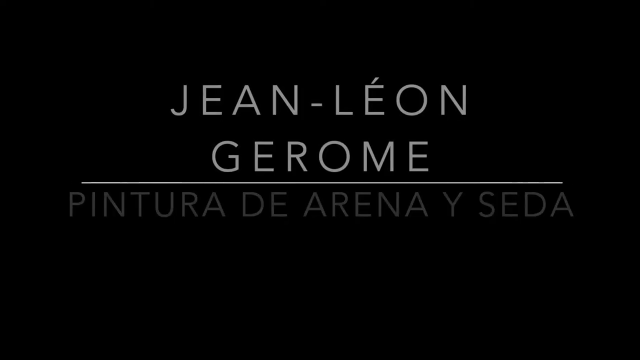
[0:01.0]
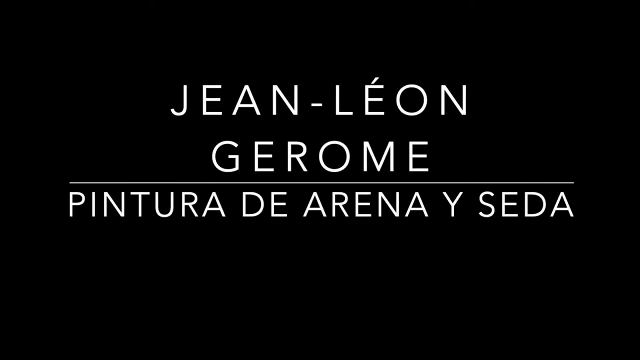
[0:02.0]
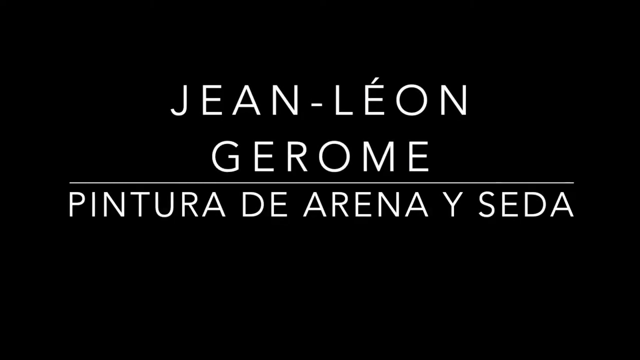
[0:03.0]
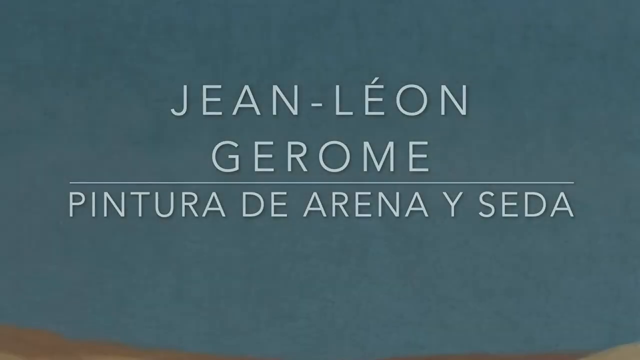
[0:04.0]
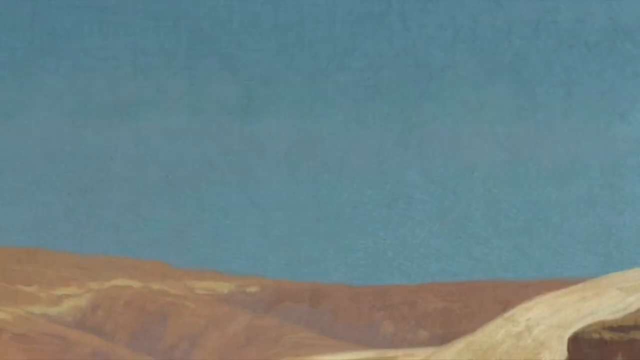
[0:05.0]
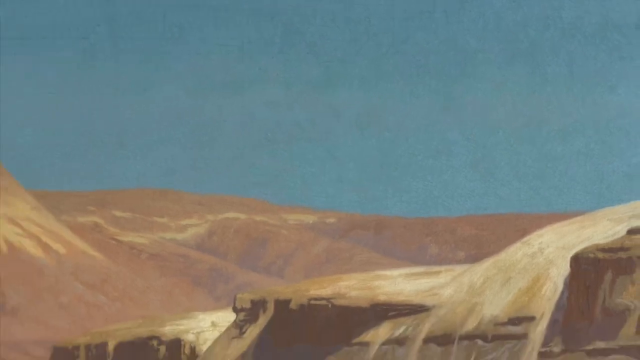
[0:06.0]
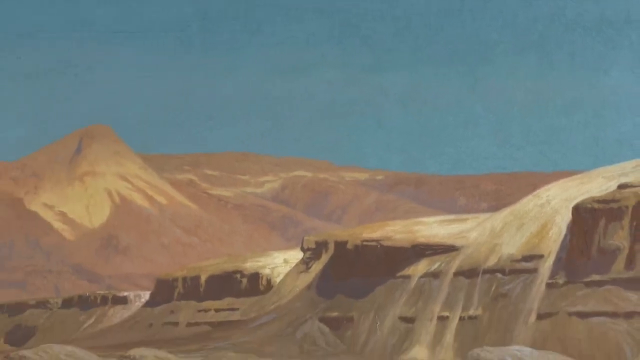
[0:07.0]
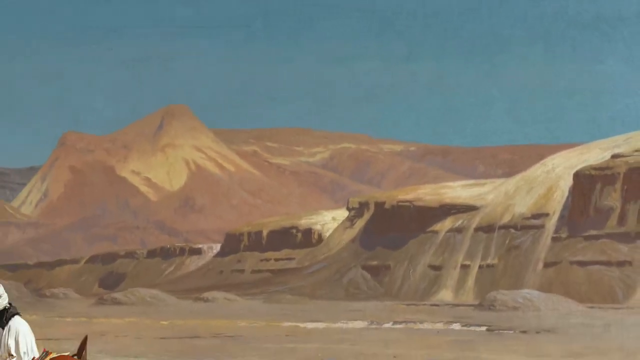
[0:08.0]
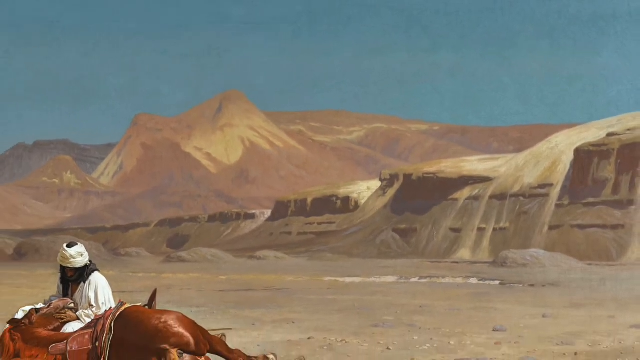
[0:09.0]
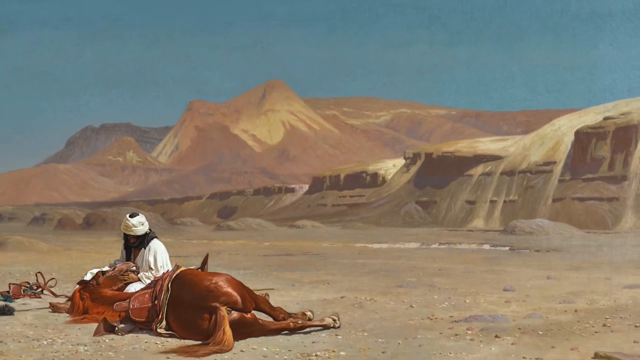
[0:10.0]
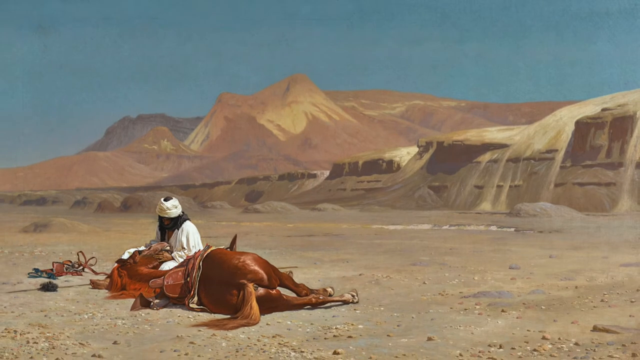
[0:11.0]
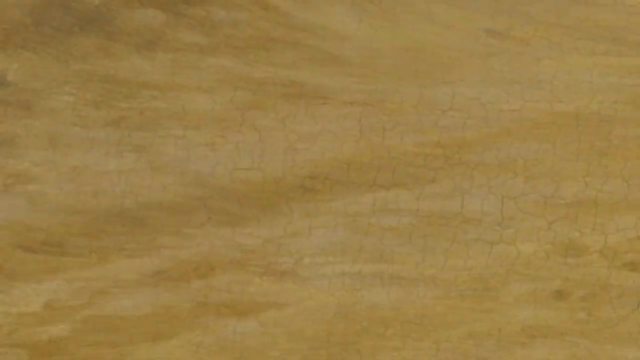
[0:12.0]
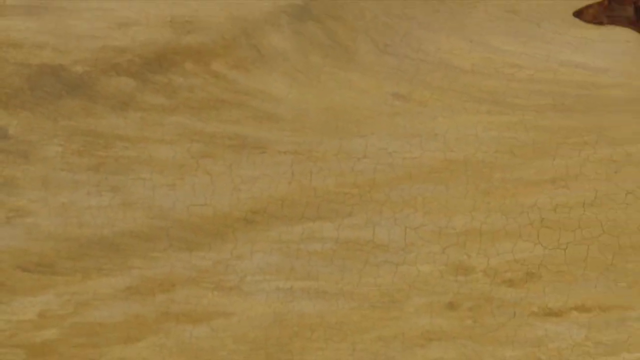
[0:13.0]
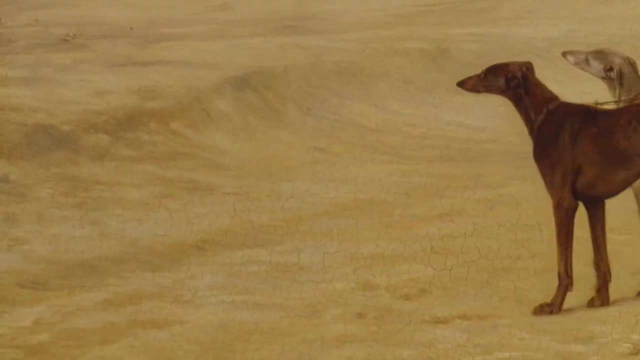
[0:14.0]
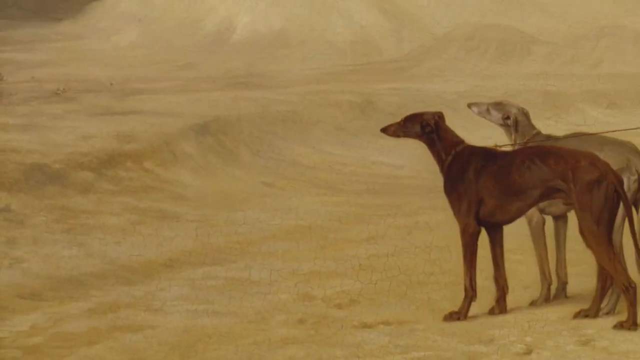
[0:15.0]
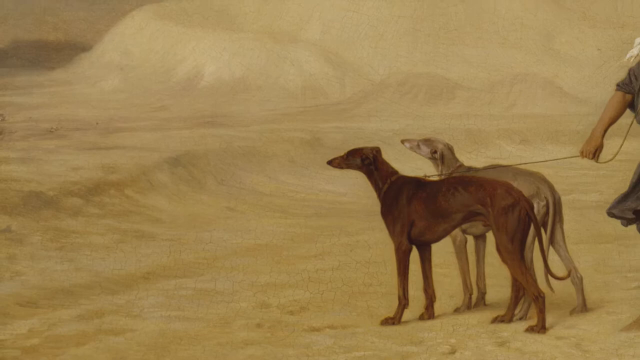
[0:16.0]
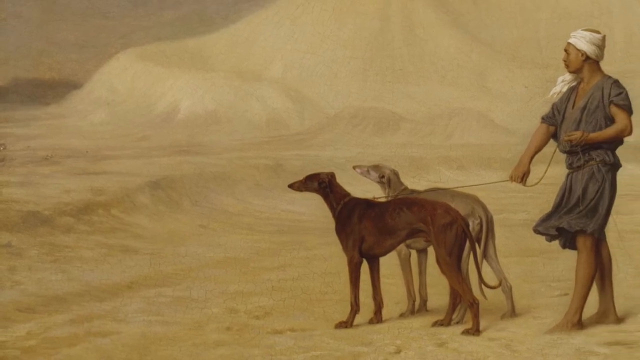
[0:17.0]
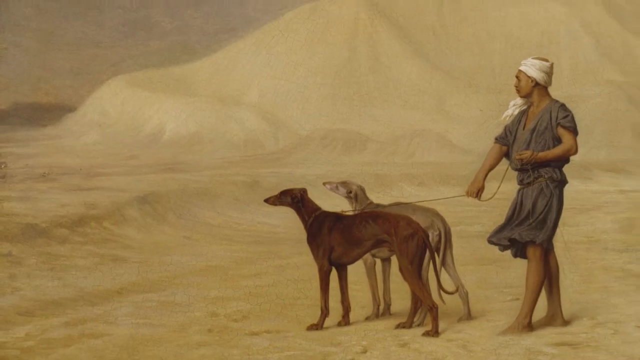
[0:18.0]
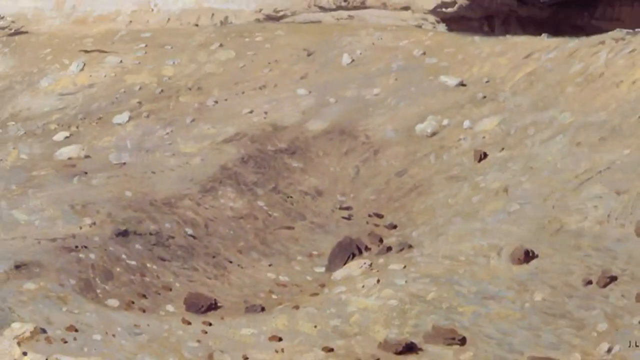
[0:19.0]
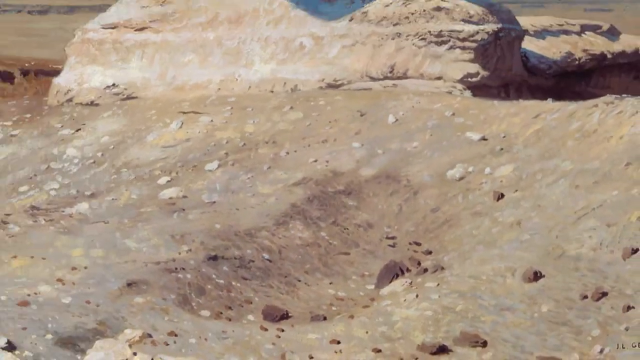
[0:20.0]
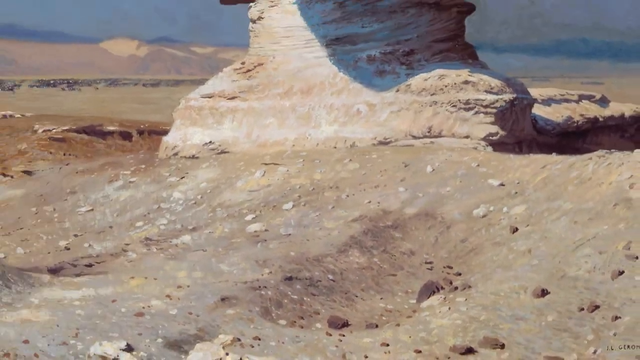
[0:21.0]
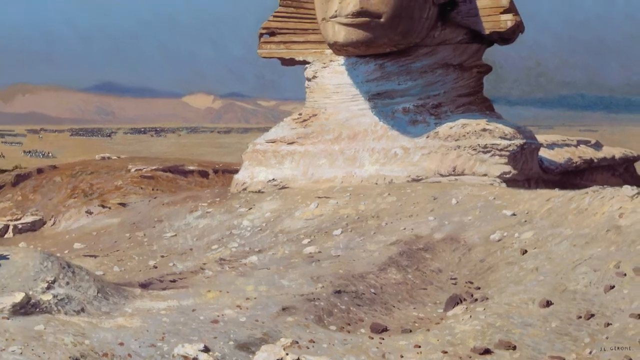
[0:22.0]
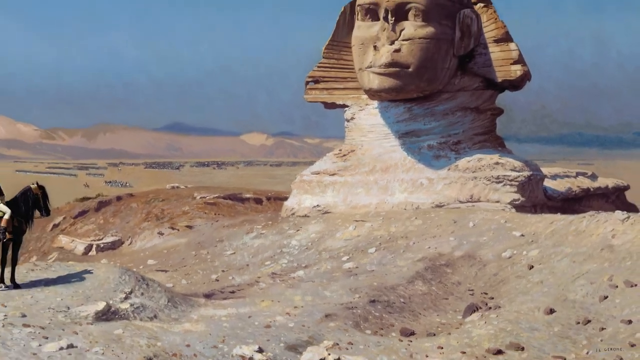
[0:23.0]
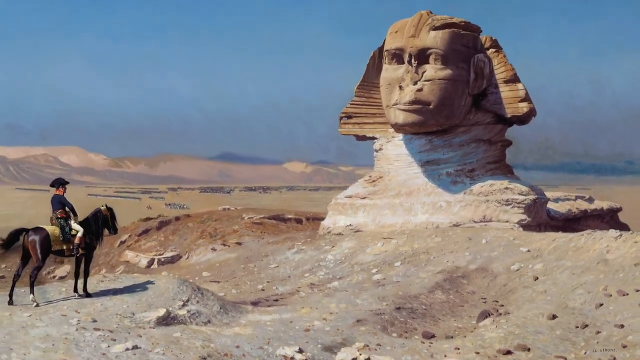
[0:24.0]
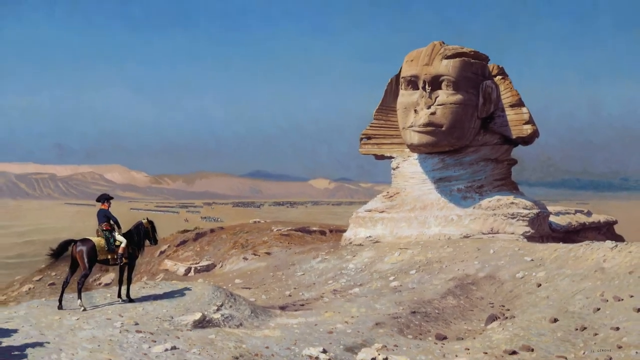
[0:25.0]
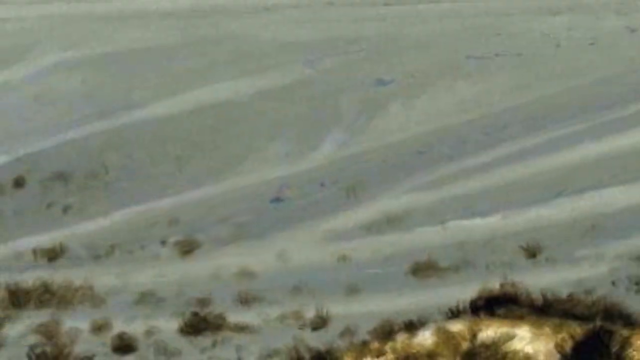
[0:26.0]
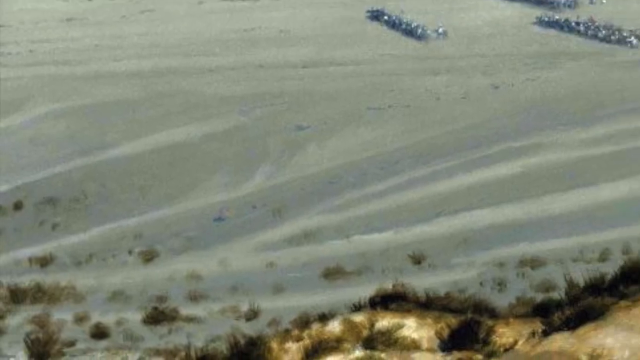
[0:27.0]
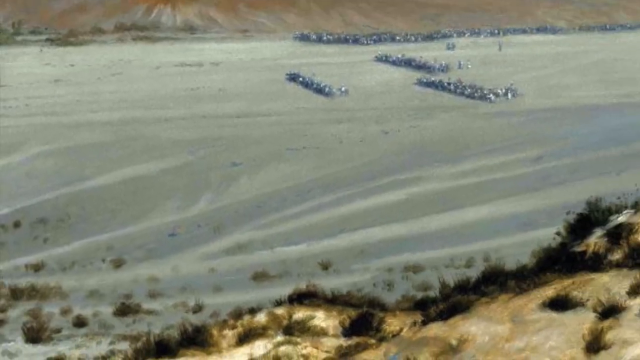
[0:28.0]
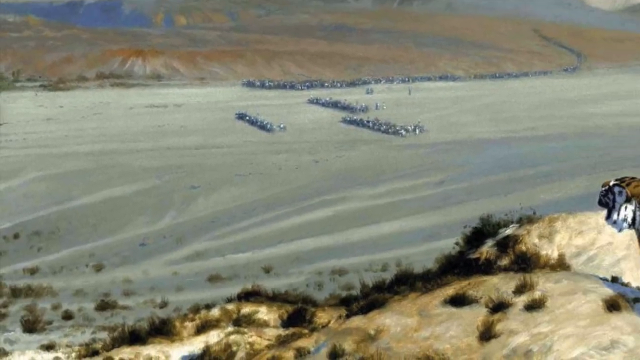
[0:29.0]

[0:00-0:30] The video opens with what looks like a heading or introduction reading "Jean Leon Jerome," with some text underneath that seems to be Spanish or something similar. It then moves to what seems to be a desert, panning in from the side to show a person leaning over their animal, apparently a horse, which has a saddle on it. The person has what seems to be something white wrapped around their head, apparently a protective garment. The camera pans out to show a barren, desert-like area. Two dogs appear, looking like pointers or greyhound-like dogs; they are skinny, one gray and the other brown. An individual wearing a blue garment holds them on a leash while looking off into the distance. A sphinx's head pops out of the desert, and a person sits on a horse there. A tiger then comes into view.